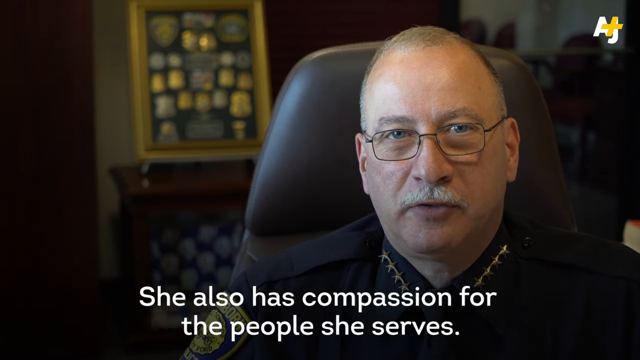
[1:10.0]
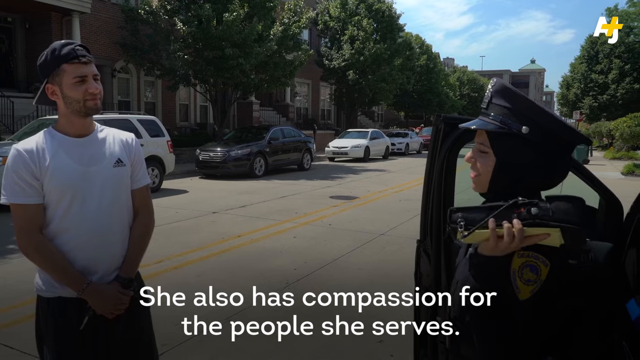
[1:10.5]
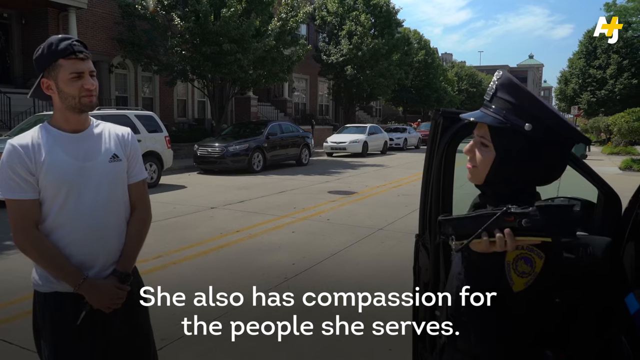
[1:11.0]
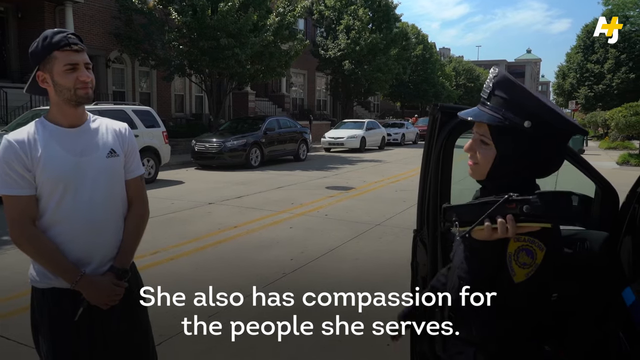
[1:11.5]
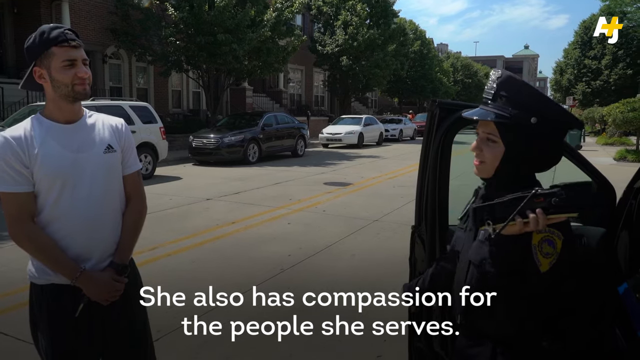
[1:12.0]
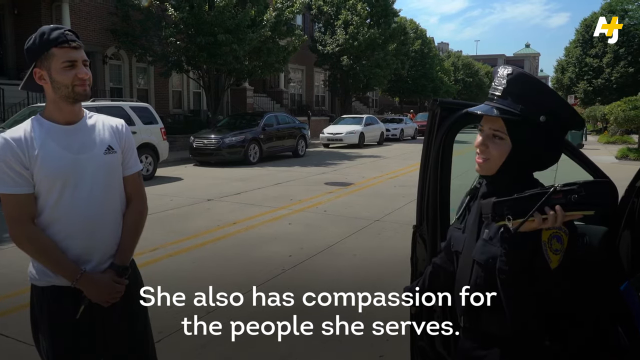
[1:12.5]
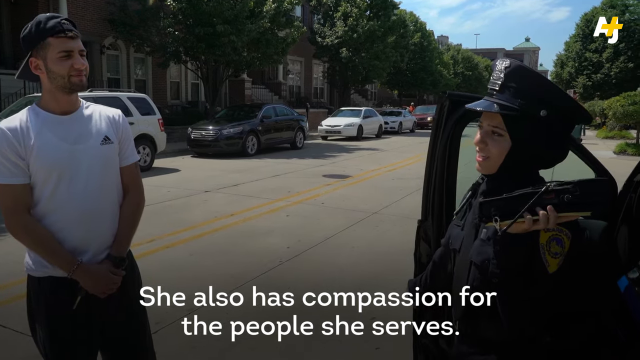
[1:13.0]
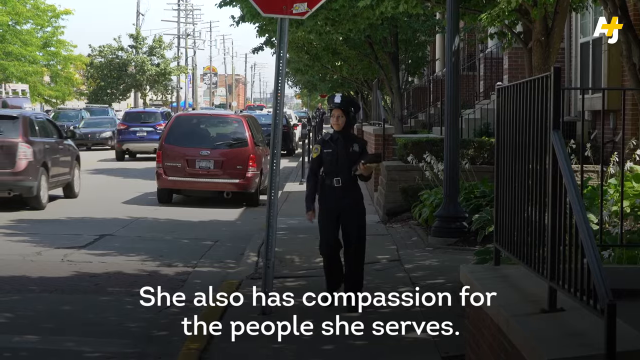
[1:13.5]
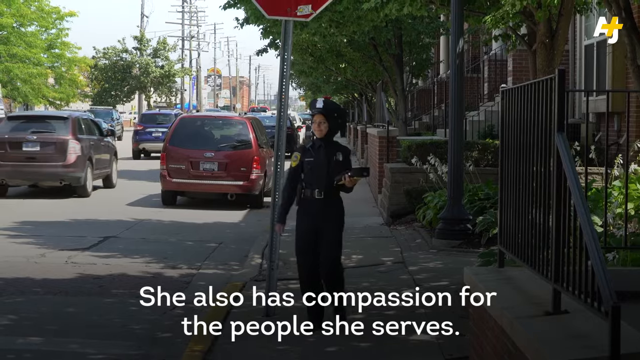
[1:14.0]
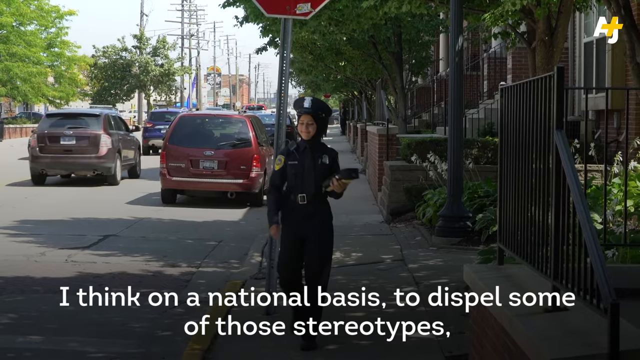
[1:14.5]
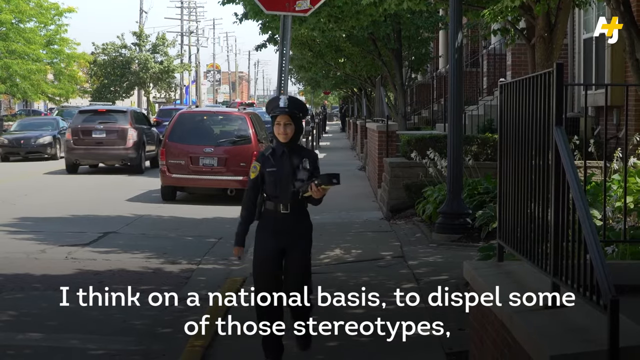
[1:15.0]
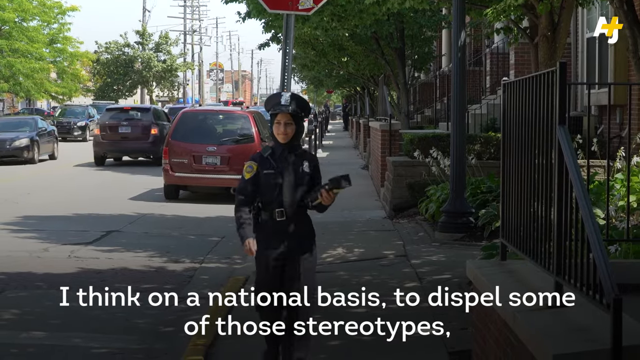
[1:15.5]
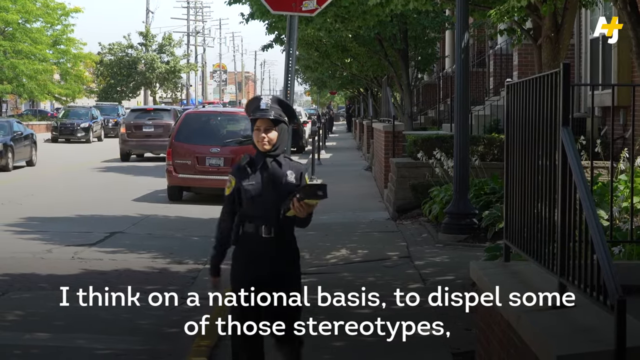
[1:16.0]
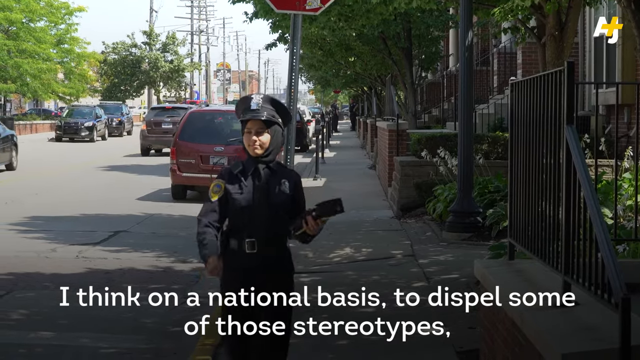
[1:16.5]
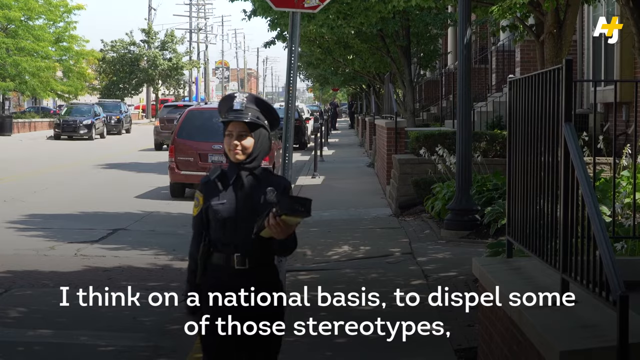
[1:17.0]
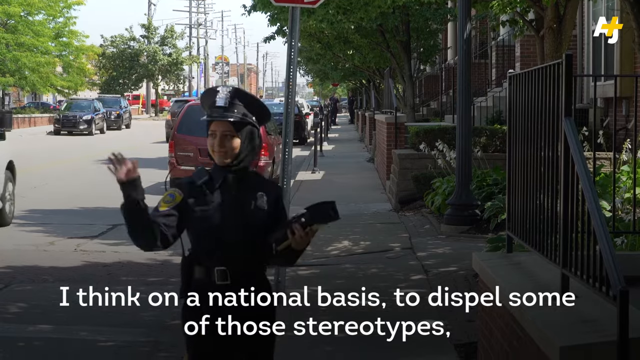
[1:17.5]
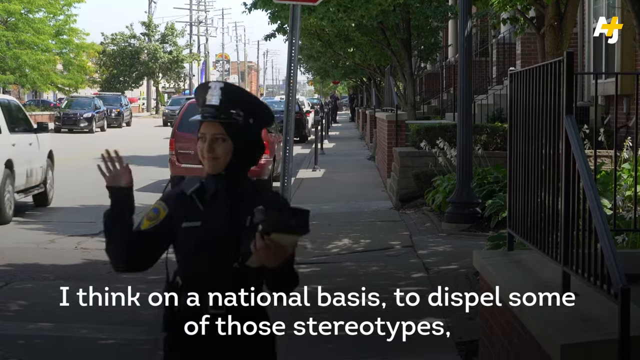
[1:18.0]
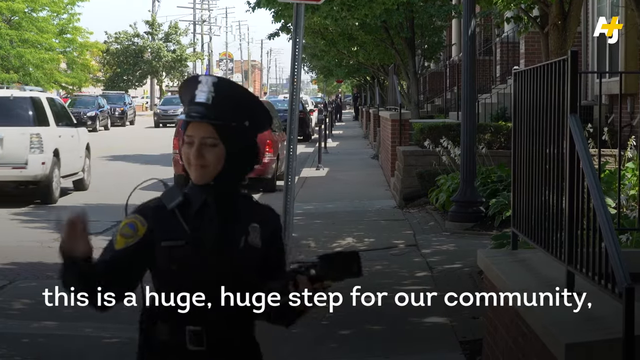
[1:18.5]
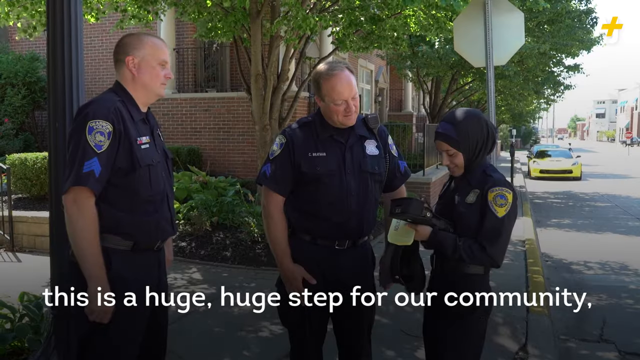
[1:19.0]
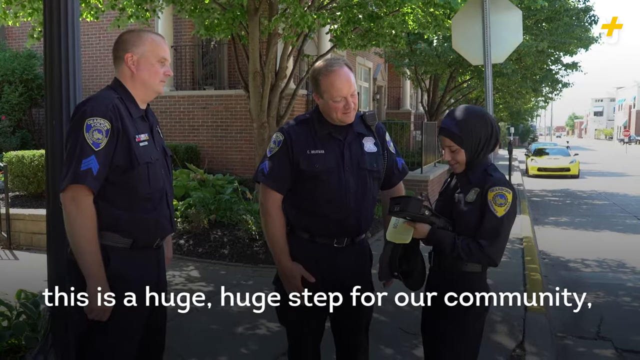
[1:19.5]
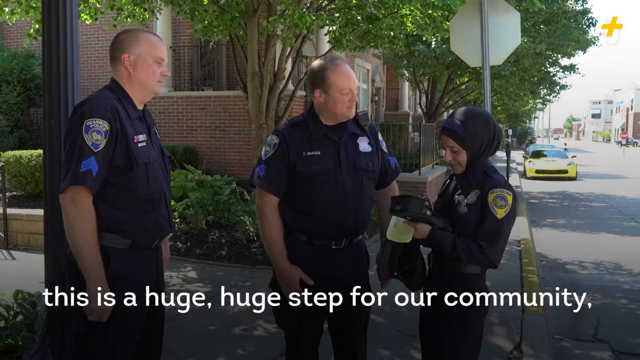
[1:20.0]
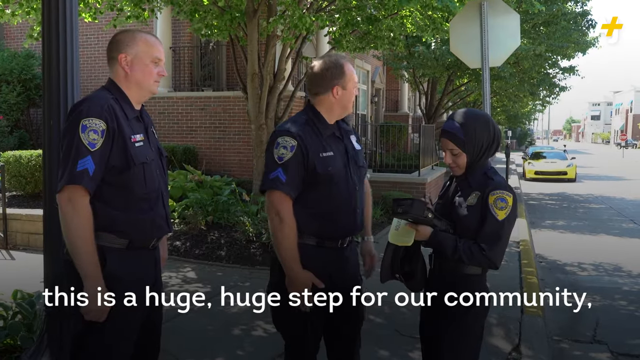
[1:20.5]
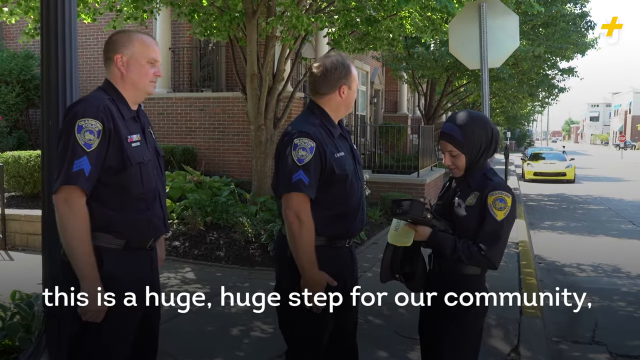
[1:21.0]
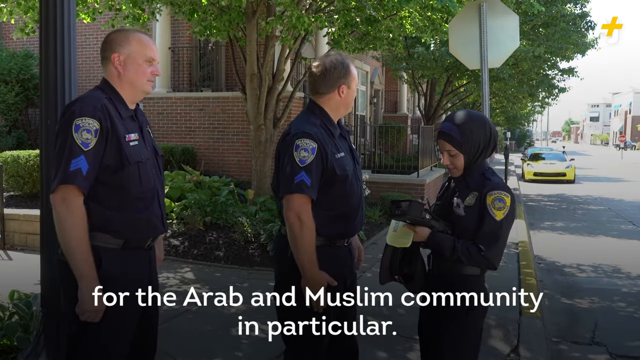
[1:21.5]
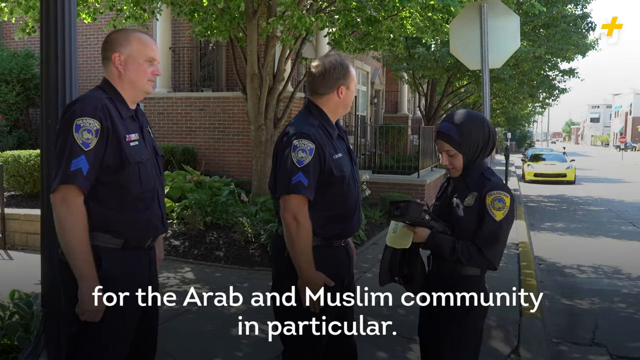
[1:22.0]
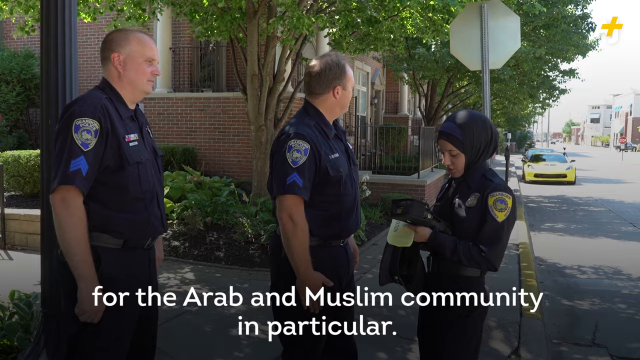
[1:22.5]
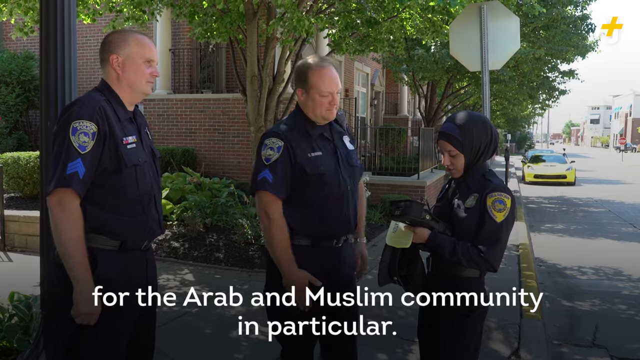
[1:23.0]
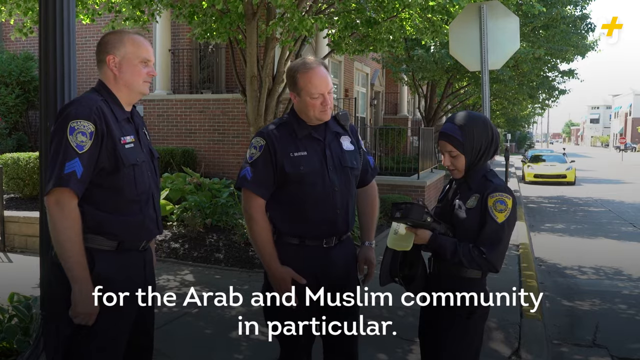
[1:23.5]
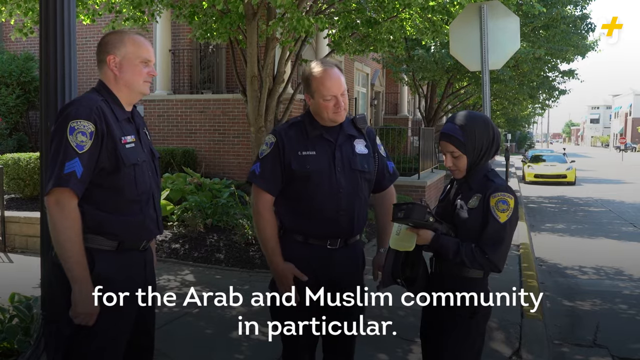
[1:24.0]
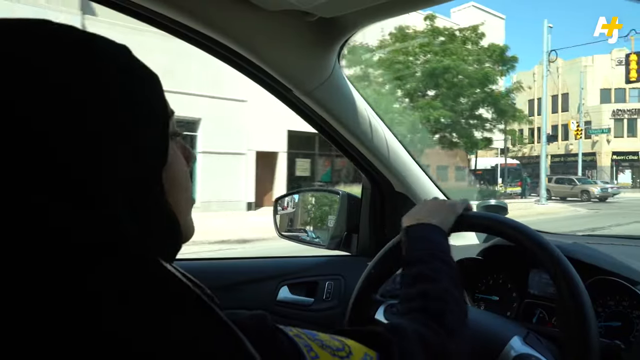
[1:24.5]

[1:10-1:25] The chief of police says she also has compassion for the people she serves. Amal walks through her community with what looks like a citation book in hand. In a seemingly light-hearted moment with what may be firefighters or other police officers, she appears to be writing something in her citation book. She seems to be finishing the citation for the high-end yellow sports car seen earlier. She appears to wave and smile at people in her community.